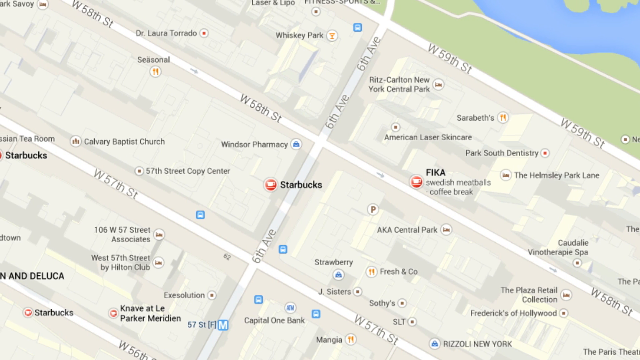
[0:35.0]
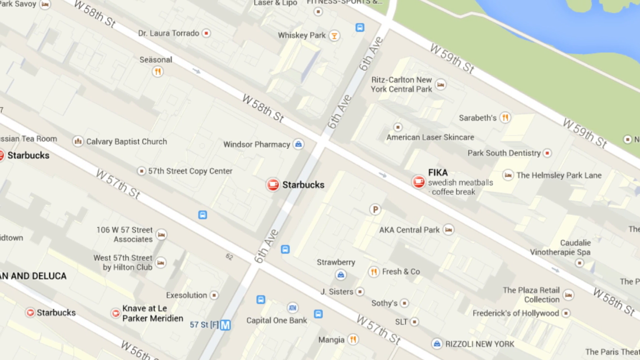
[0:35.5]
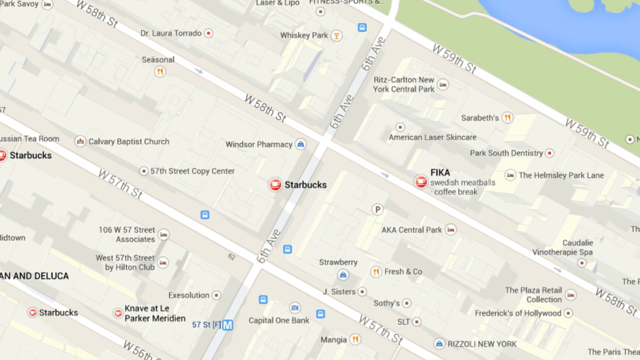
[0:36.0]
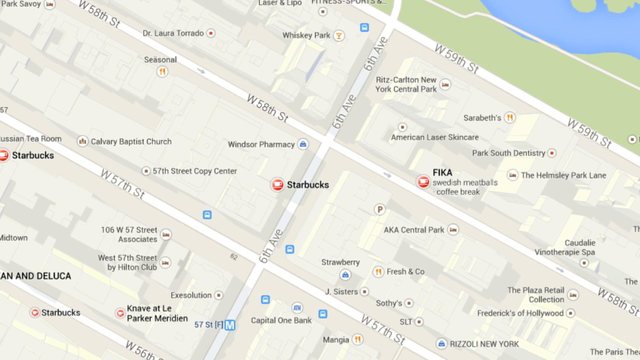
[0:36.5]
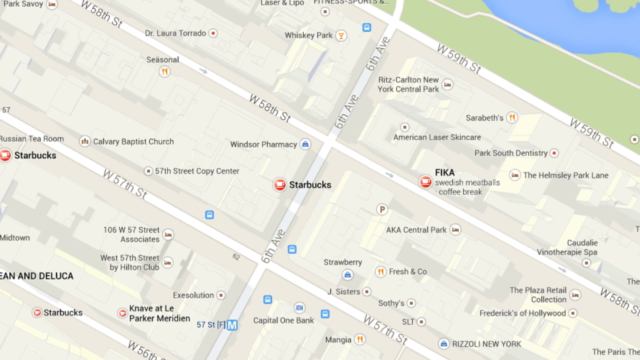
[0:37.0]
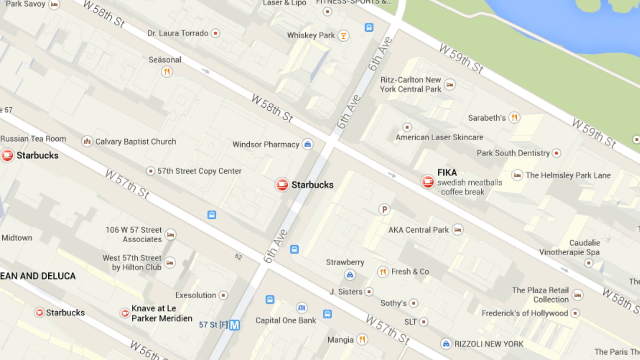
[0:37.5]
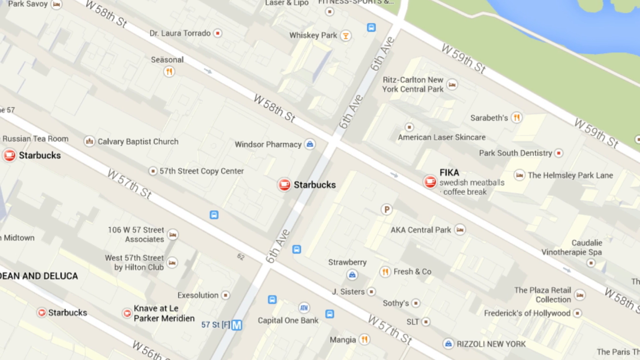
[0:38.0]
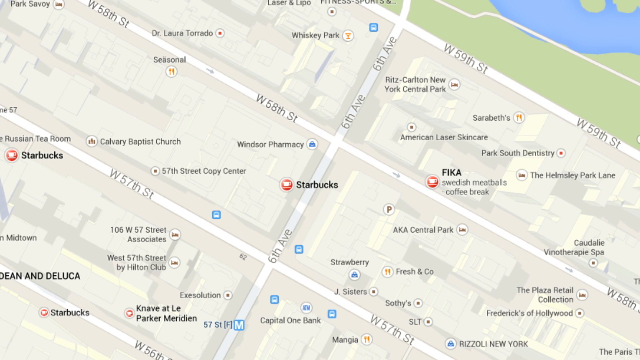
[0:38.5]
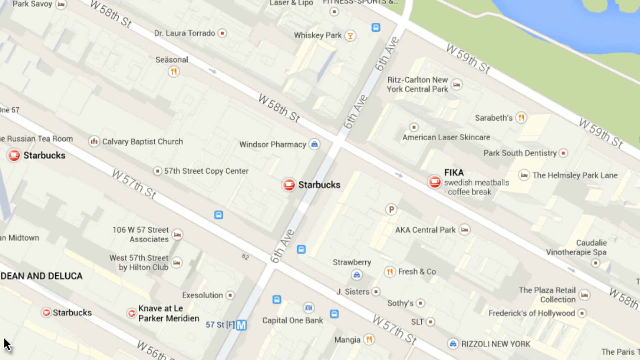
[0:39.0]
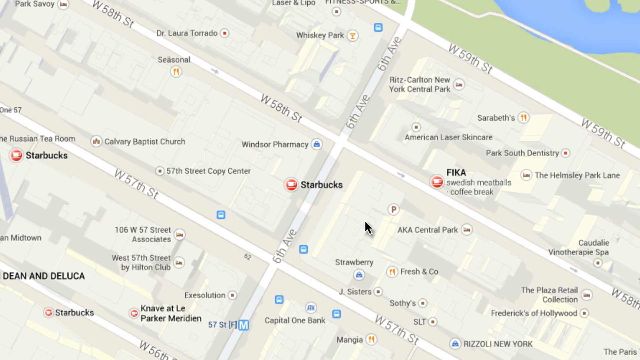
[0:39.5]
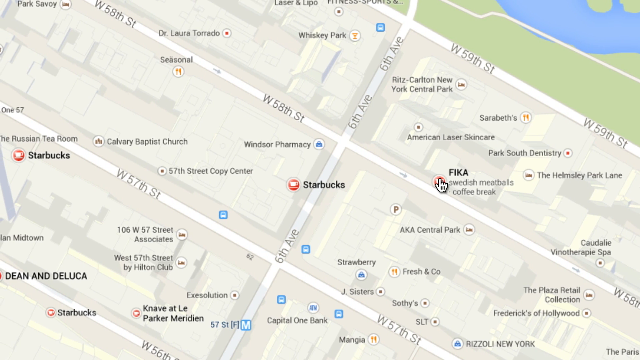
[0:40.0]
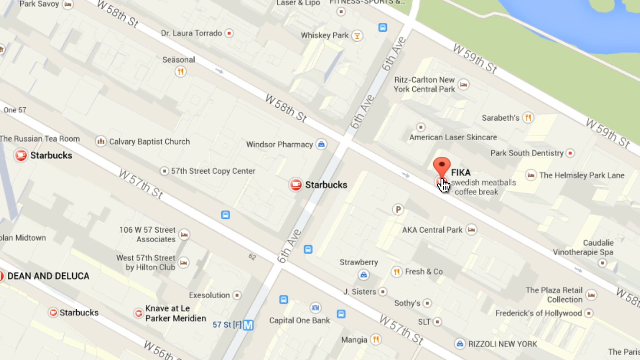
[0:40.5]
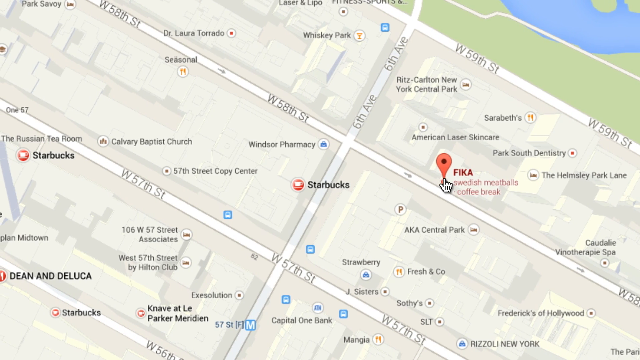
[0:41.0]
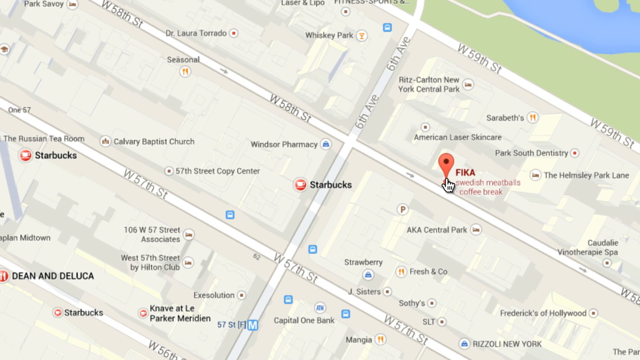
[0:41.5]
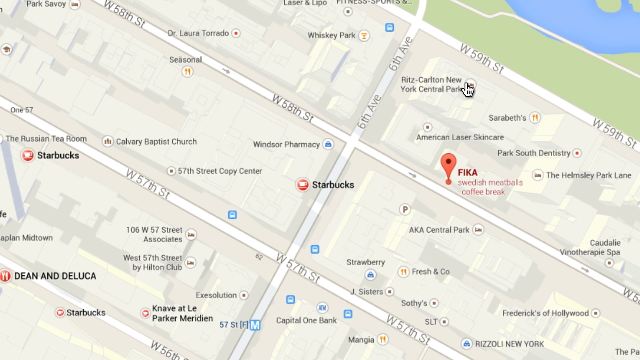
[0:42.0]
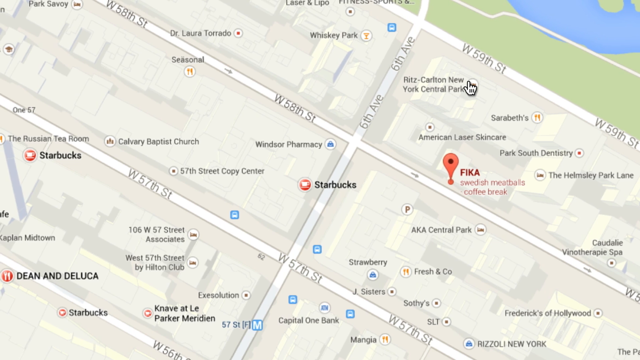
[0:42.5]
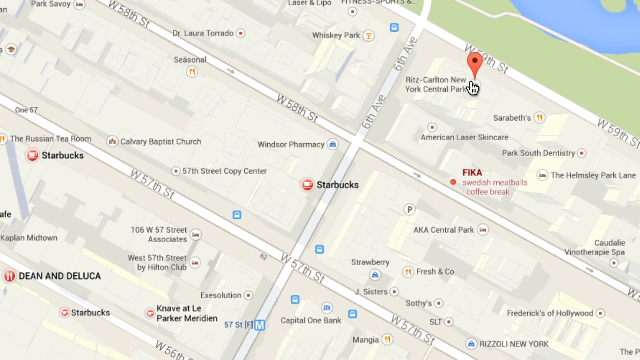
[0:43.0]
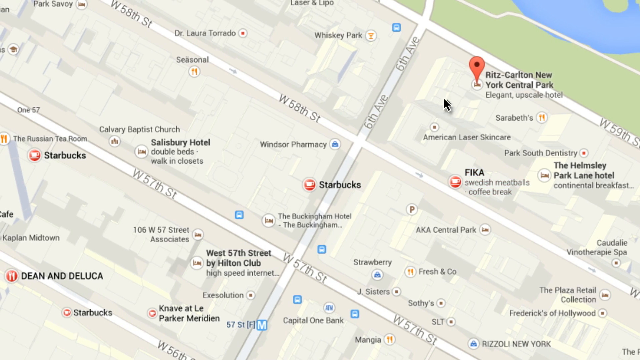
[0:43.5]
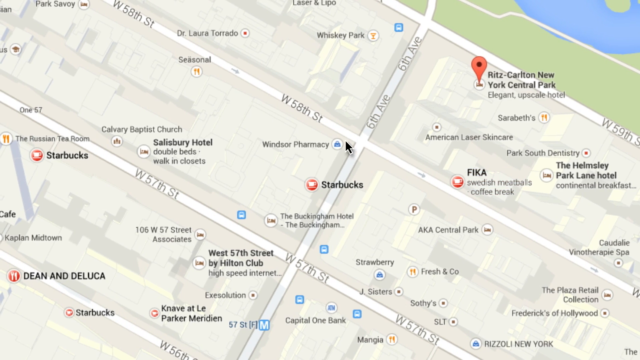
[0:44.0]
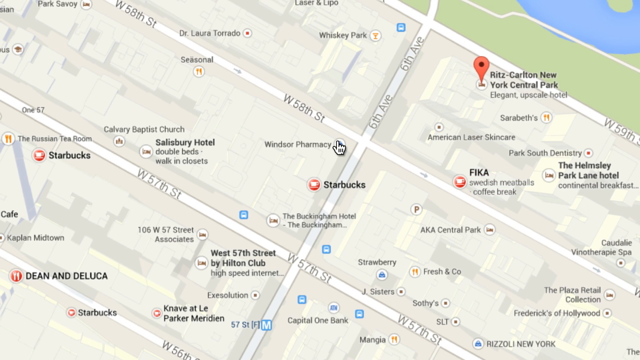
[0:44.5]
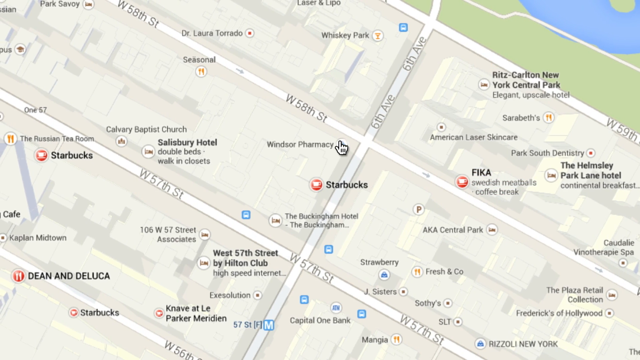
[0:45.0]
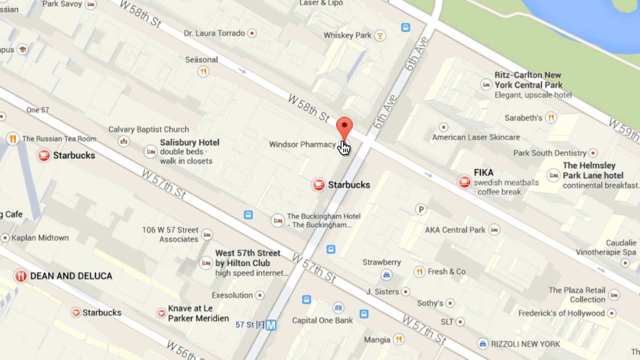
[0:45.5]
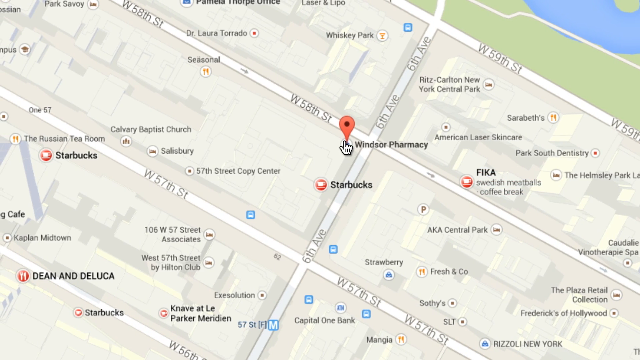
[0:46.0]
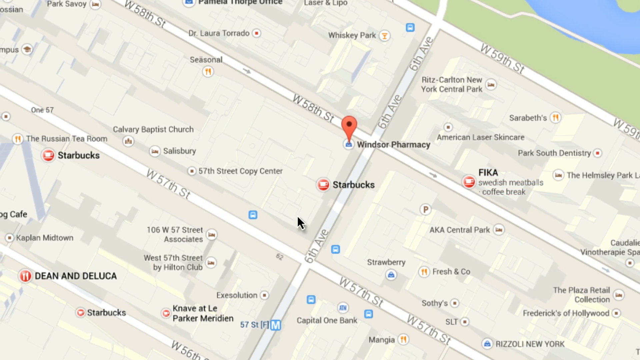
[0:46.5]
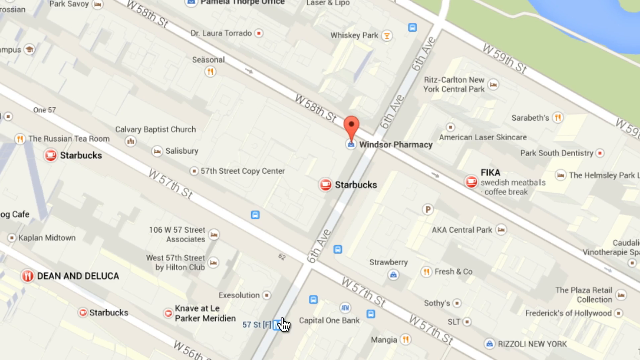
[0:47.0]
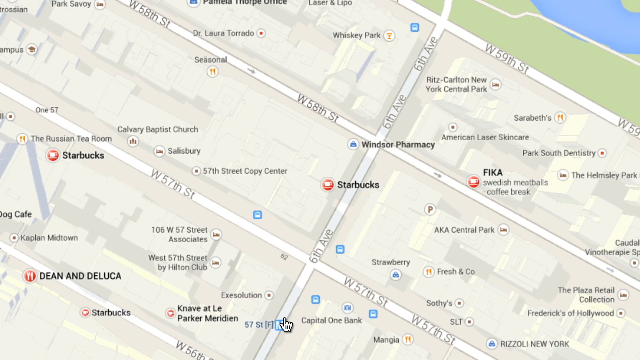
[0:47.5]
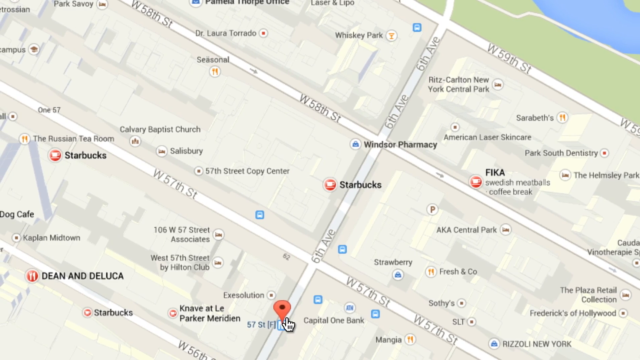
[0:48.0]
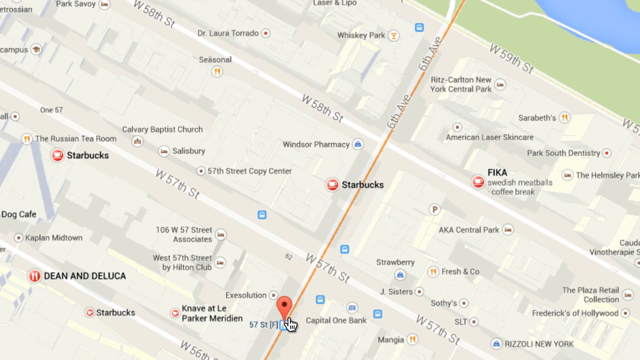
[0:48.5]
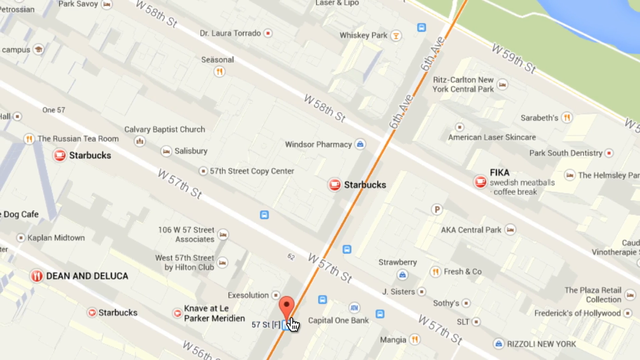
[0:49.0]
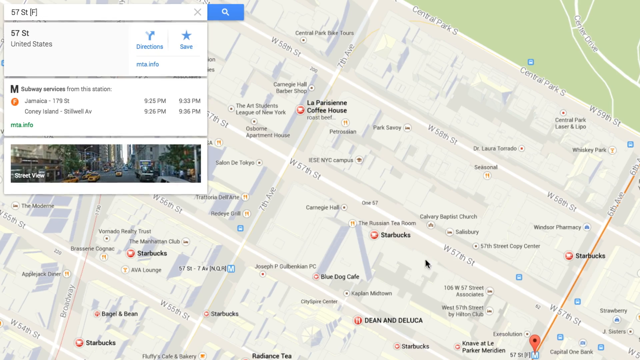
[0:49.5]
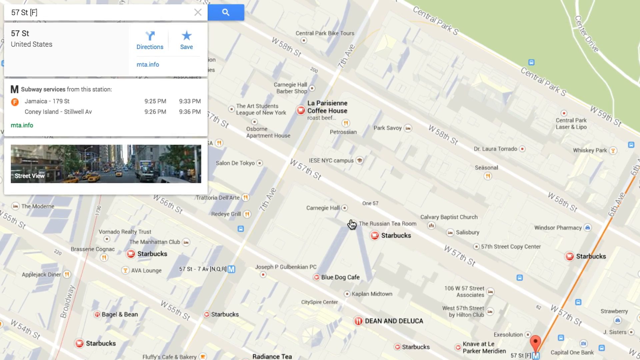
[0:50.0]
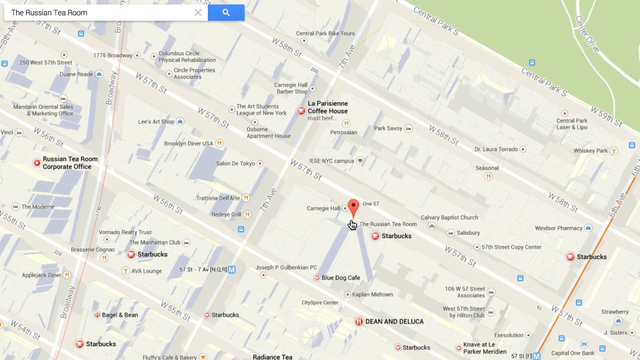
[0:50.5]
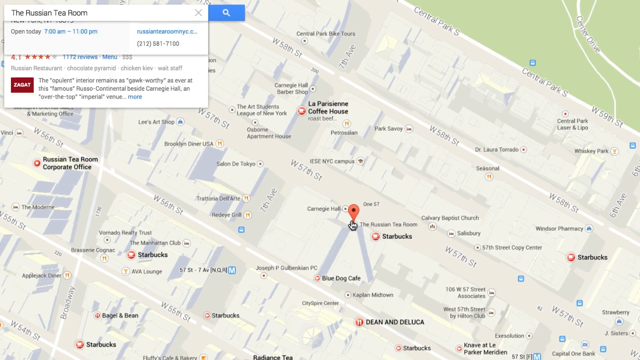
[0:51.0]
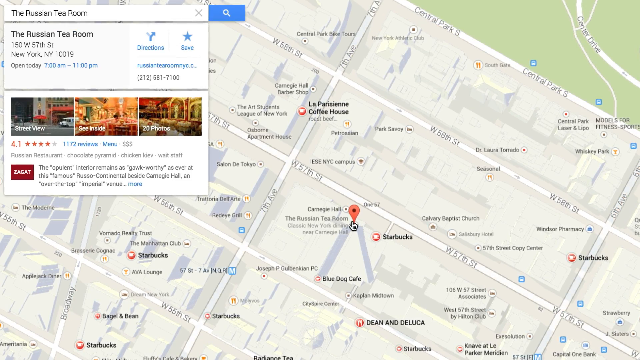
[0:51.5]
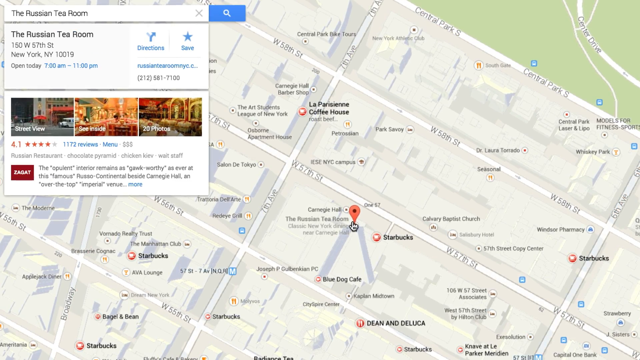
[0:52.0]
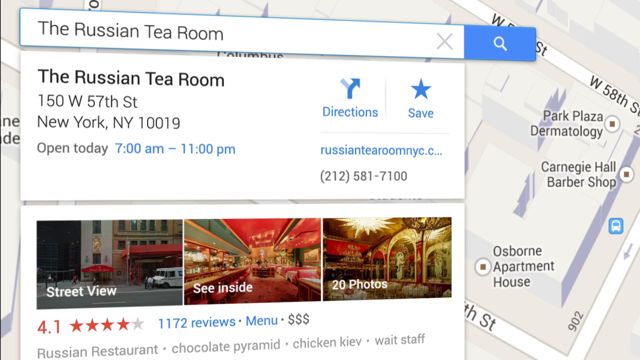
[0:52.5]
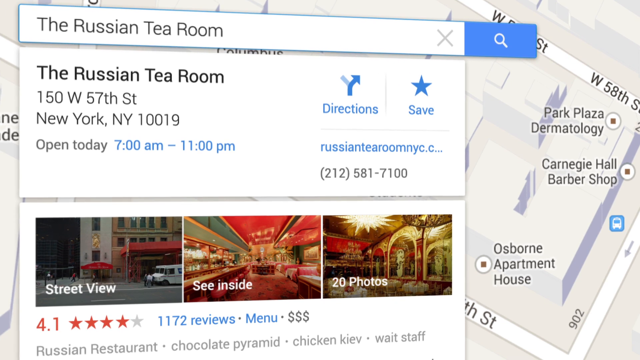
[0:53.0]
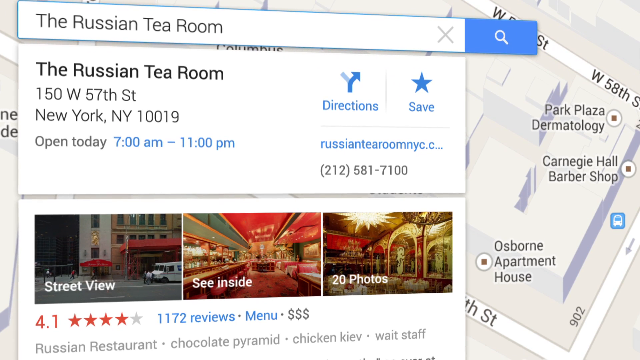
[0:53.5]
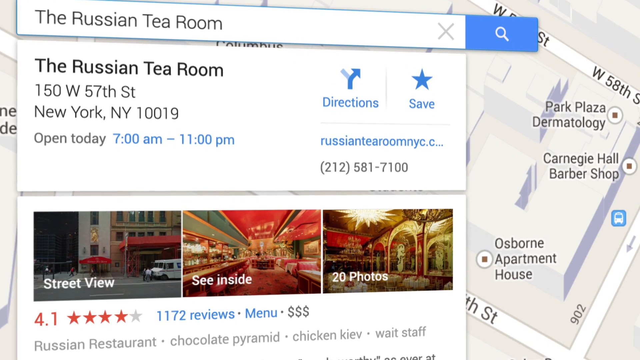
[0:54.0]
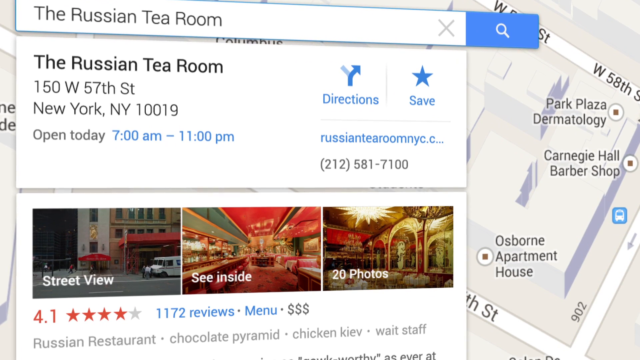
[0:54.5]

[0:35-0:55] The map shows the streets by Central Park, with Starbucks visible. The mouse clicks on F-I-K-A, then on Ritz Carlton, New York Central Park, then on Windsor Pharmacy, then on another area, and then the Russian Tea Room is shown.